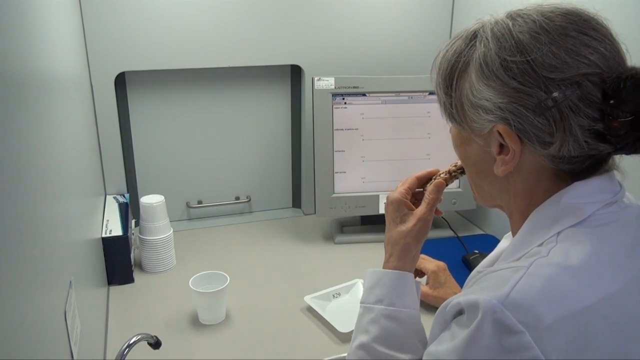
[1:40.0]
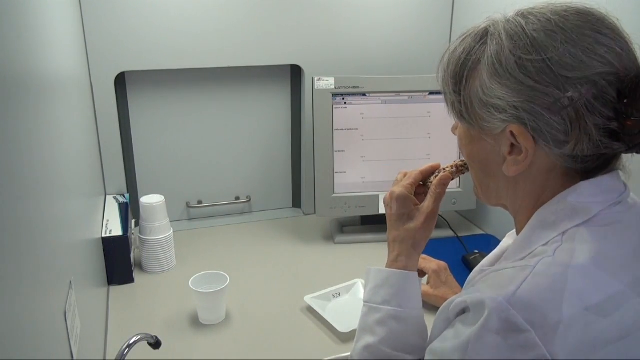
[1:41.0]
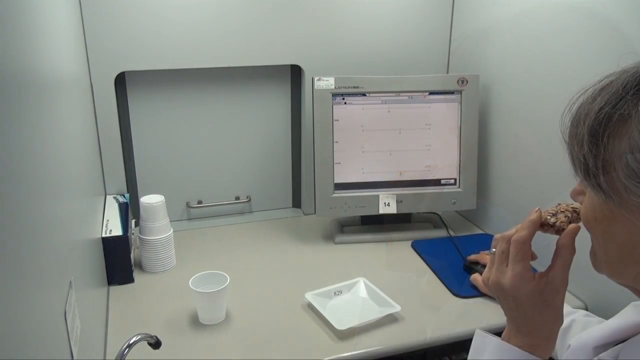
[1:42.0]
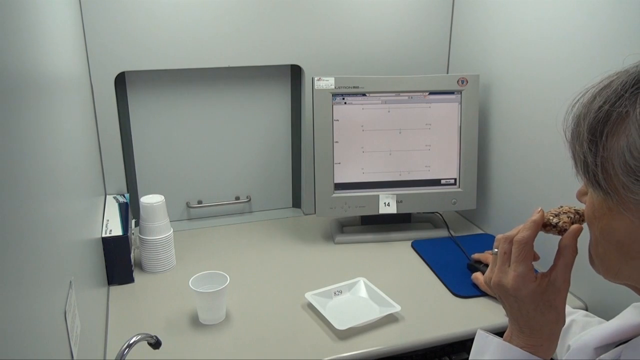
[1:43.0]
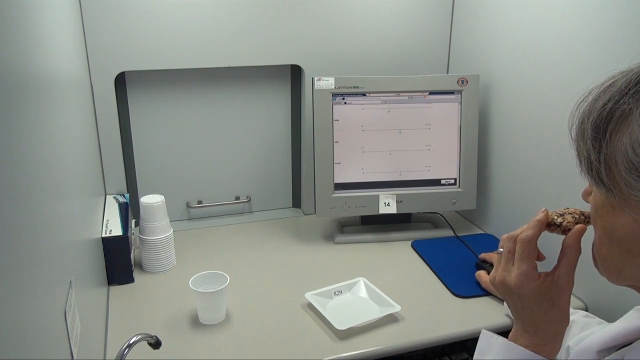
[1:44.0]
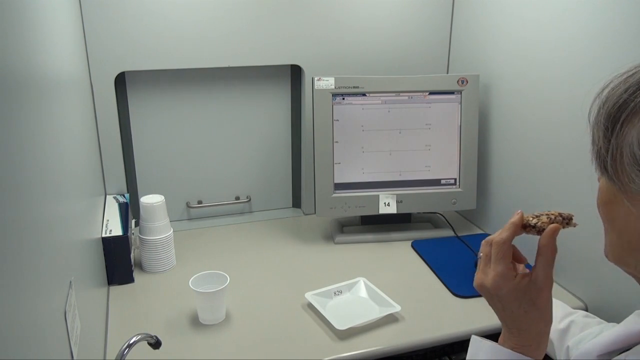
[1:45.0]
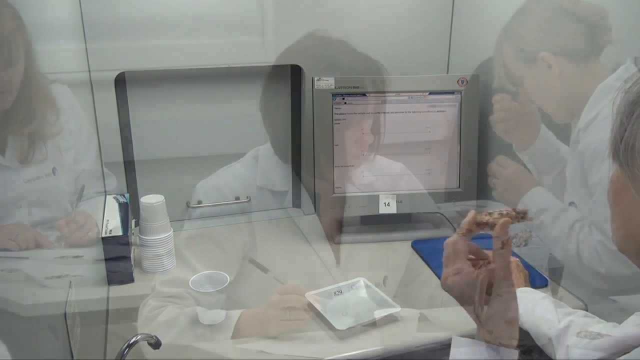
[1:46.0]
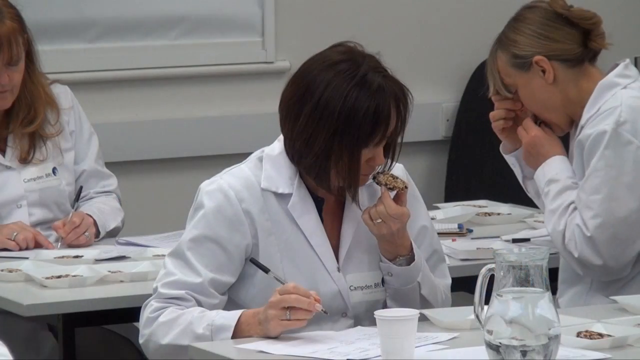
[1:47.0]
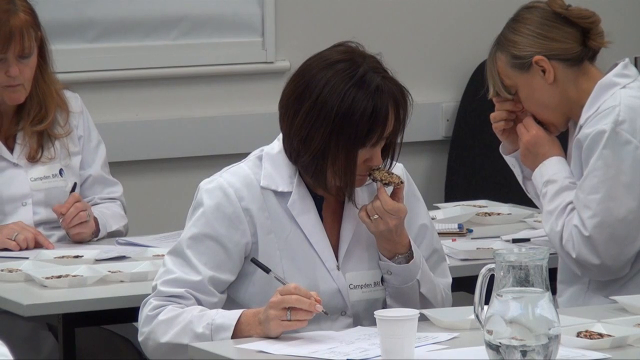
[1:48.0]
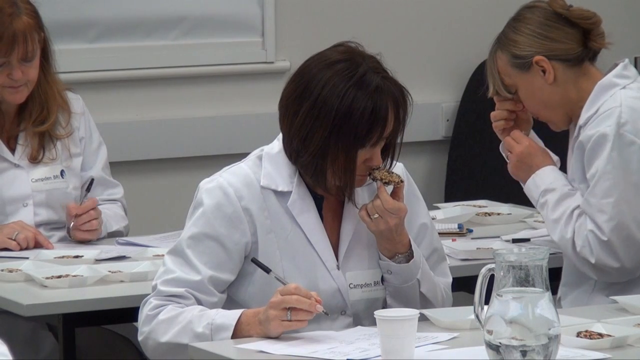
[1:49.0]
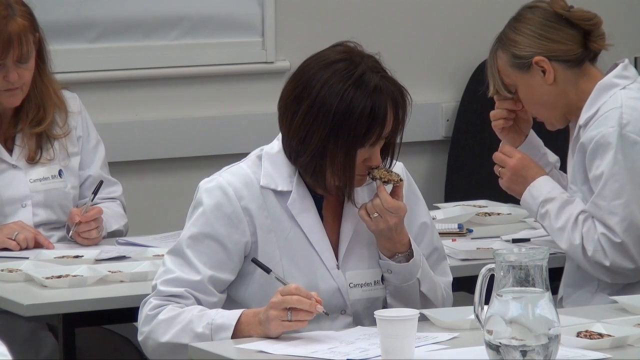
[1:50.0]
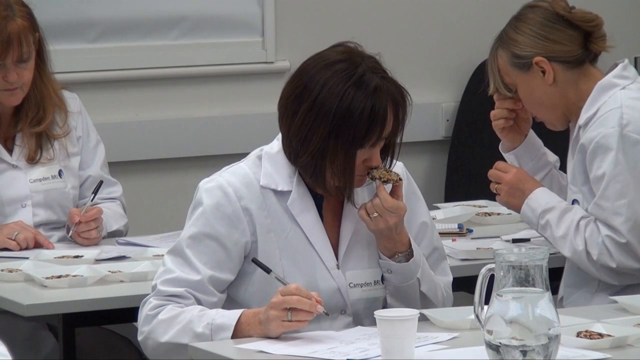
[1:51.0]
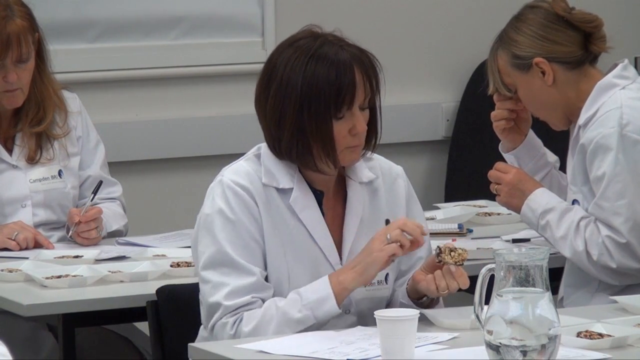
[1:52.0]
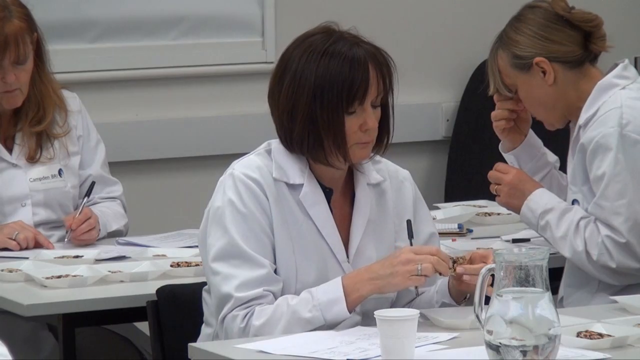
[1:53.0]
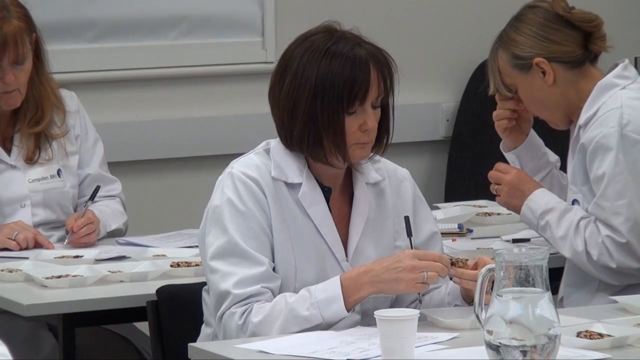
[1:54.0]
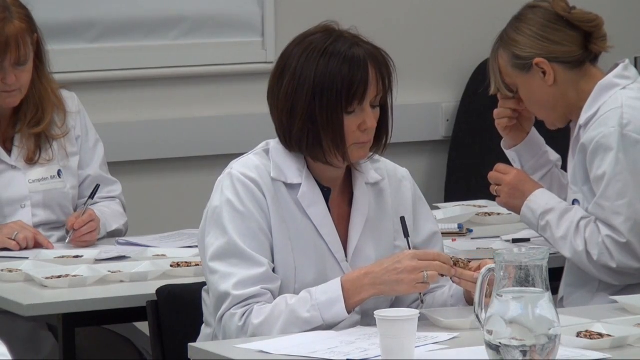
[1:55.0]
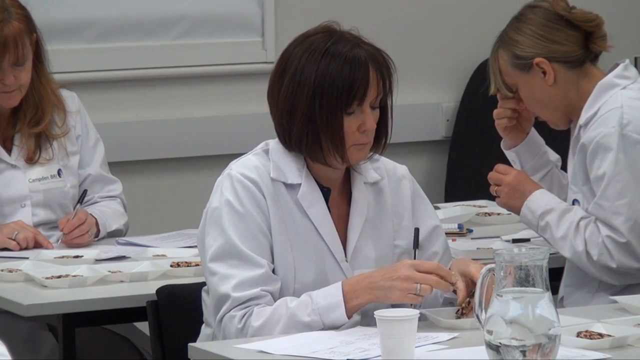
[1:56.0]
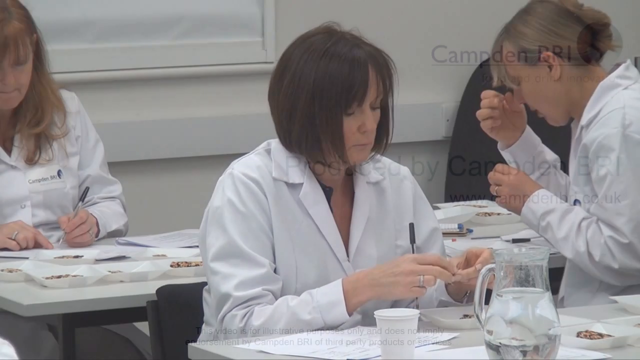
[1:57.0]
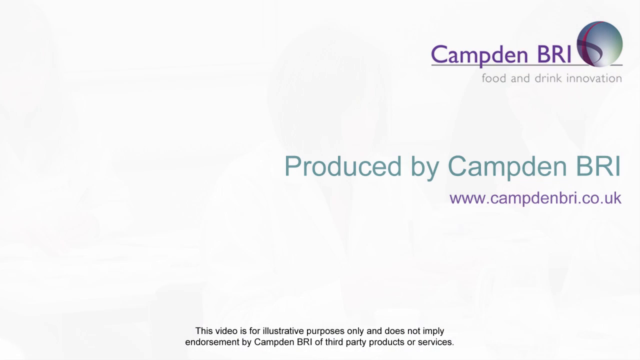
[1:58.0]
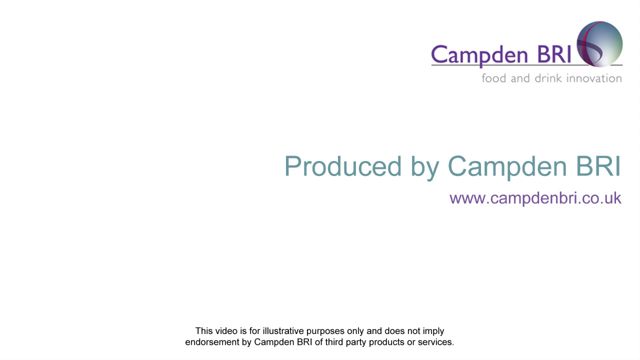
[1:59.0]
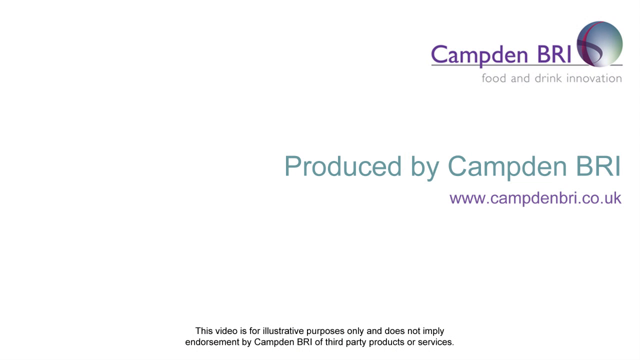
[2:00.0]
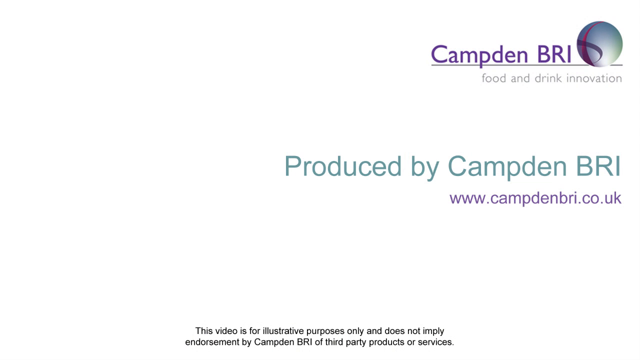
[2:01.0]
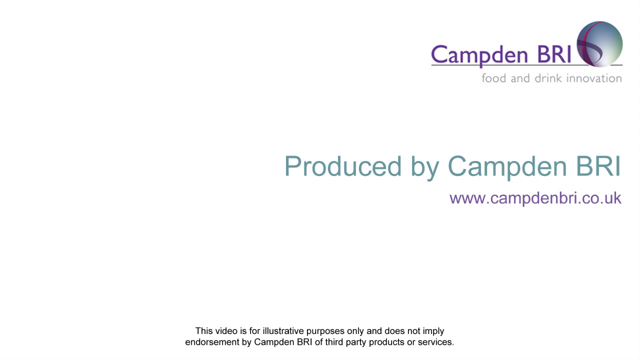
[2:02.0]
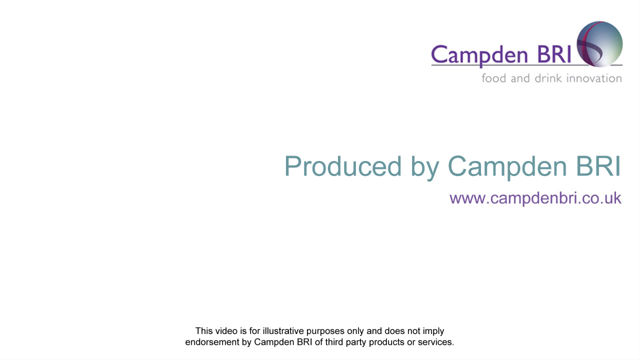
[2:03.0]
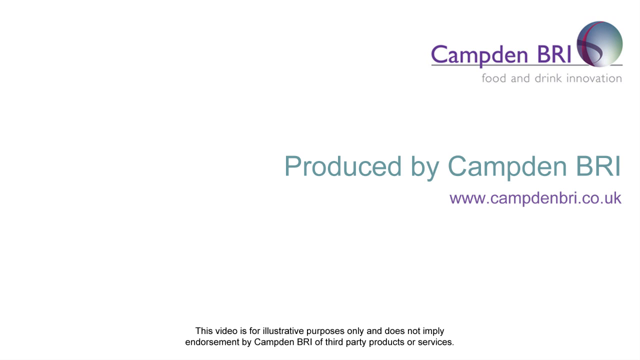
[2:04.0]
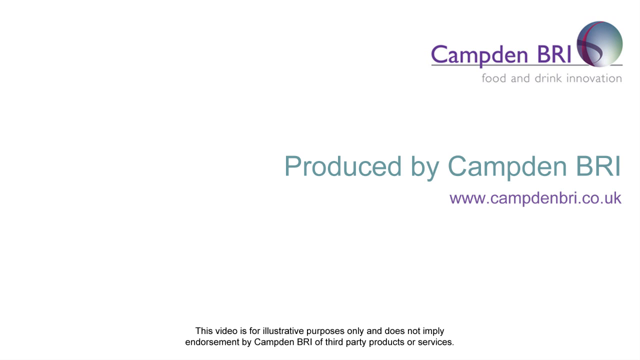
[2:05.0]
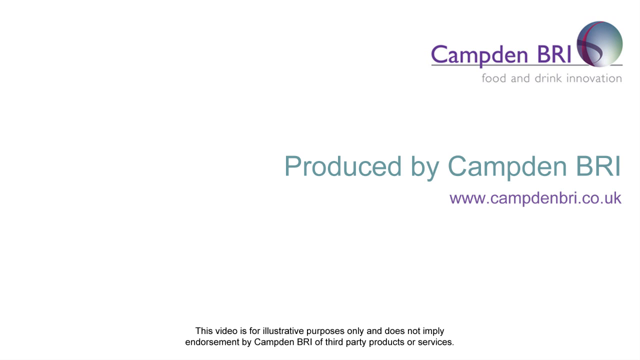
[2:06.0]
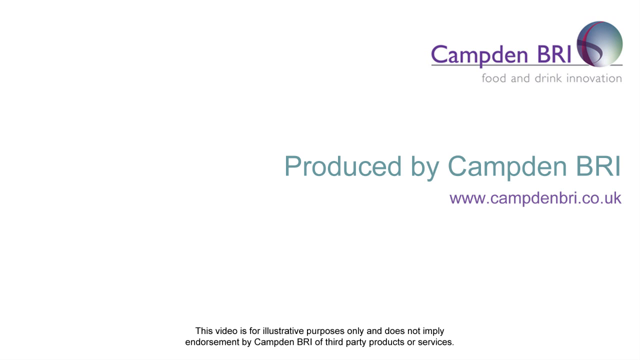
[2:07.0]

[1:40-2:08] One woman blocks her nose while chewing, trying to recognize the taste, while another chews with her nose open, concentrating on what she is eating. They seem to be supposed to recognize the food they have been given and maybe write answers, since the samples are given to them in a tray without any numbers or text. Another woman has her hair tied at the back and a takeout cup in front of her. A woman with medium-length brown hair has a takeout cup just in front of her and a glass jar that looks full of water. At the end, text reads "produced by Kempdenbri" along with a website, "www.kempdenbri.co.uk".